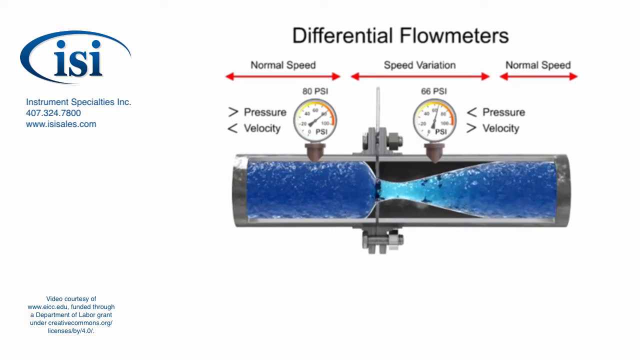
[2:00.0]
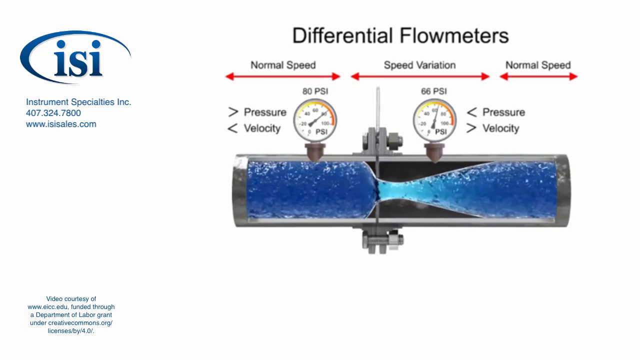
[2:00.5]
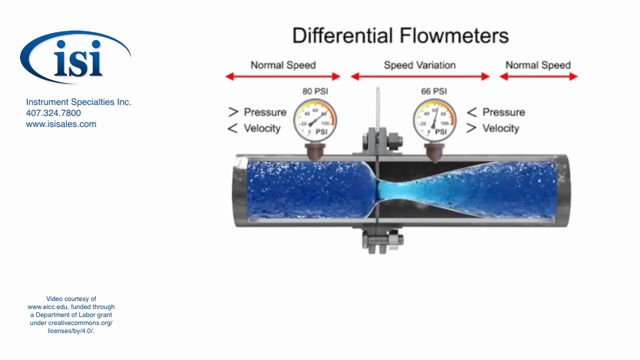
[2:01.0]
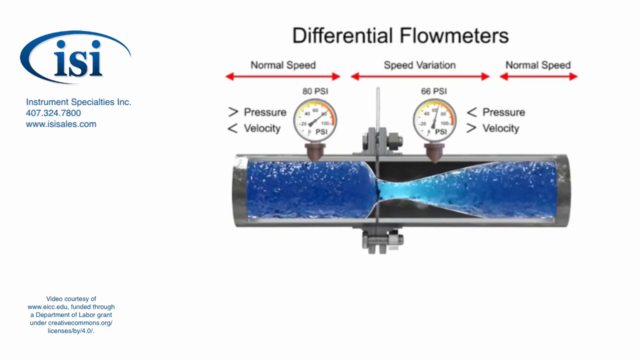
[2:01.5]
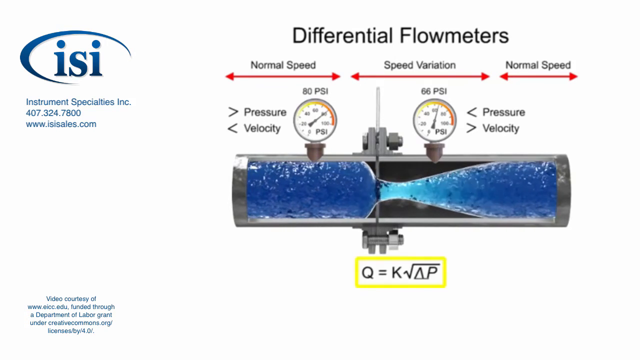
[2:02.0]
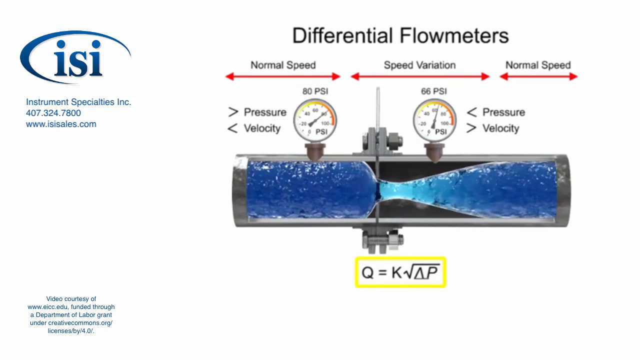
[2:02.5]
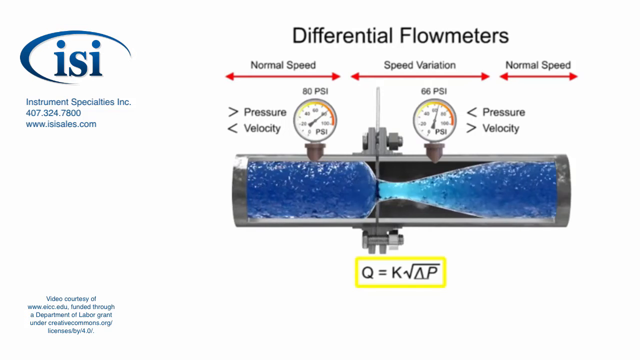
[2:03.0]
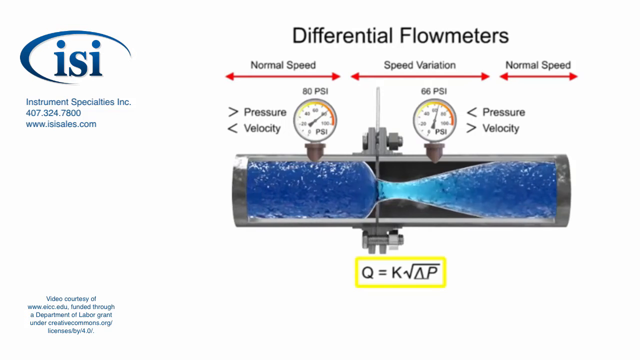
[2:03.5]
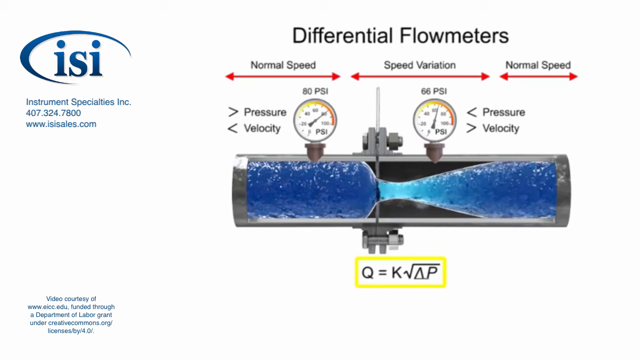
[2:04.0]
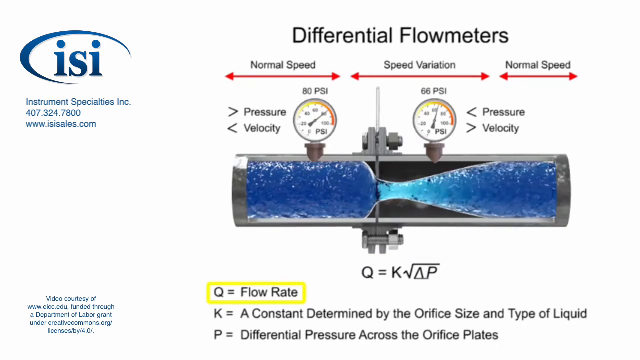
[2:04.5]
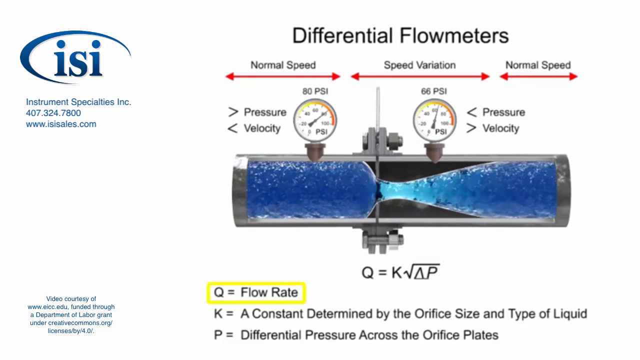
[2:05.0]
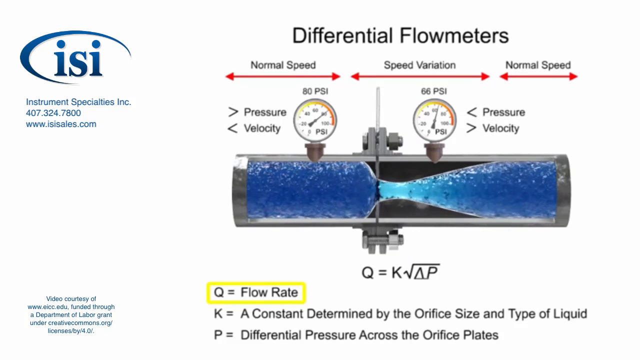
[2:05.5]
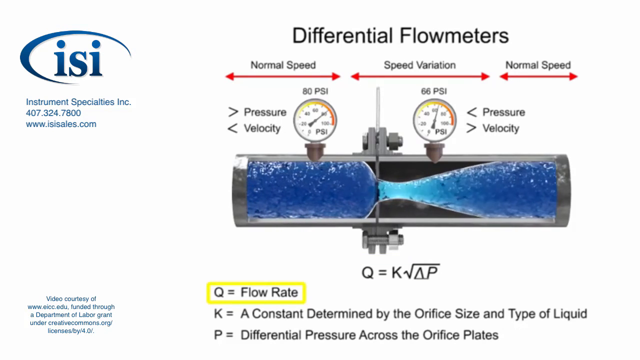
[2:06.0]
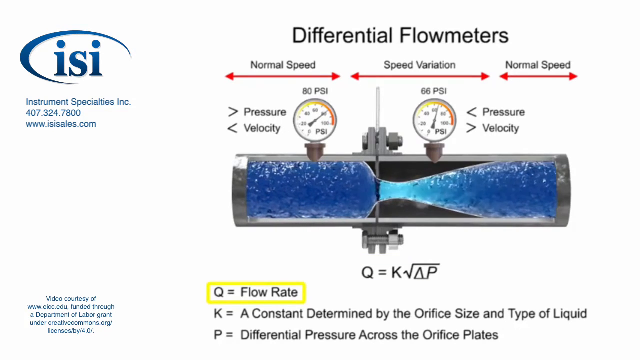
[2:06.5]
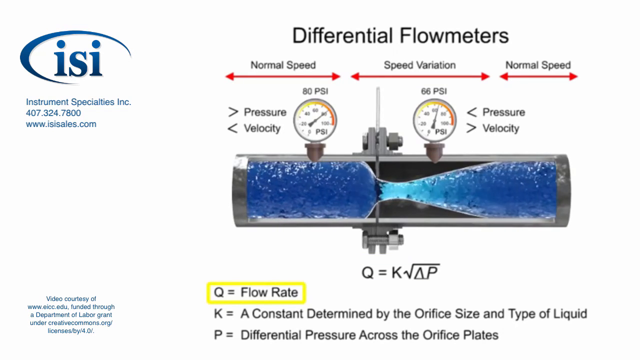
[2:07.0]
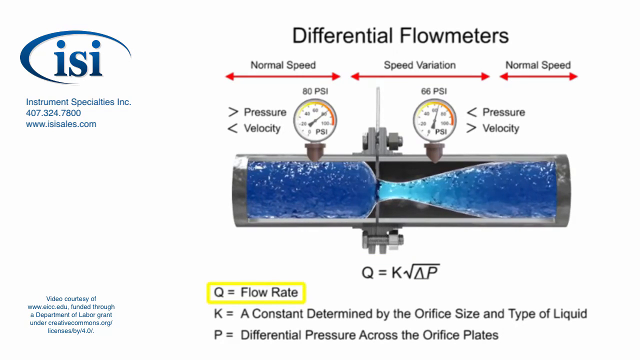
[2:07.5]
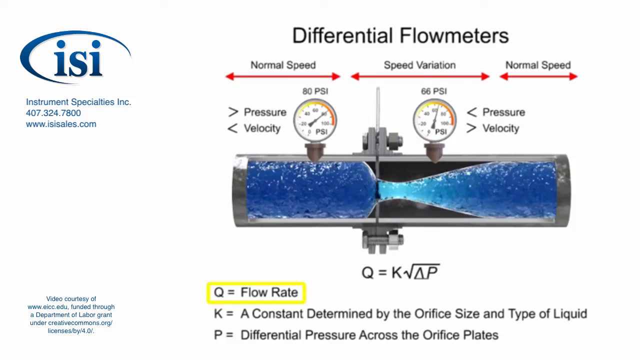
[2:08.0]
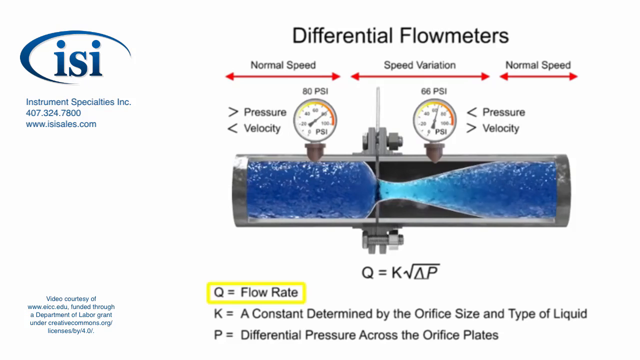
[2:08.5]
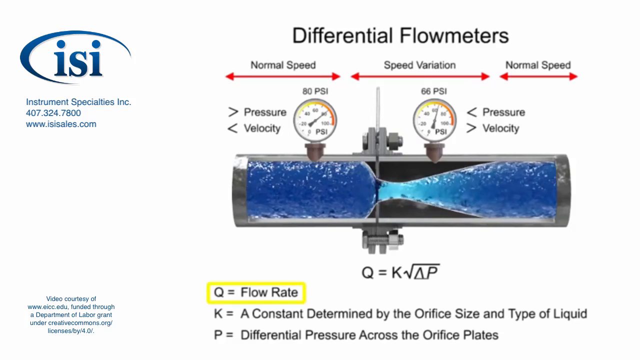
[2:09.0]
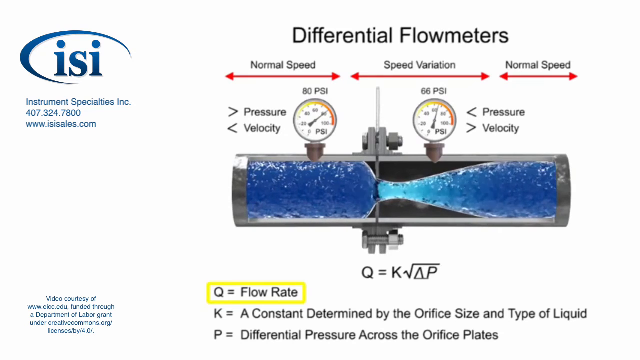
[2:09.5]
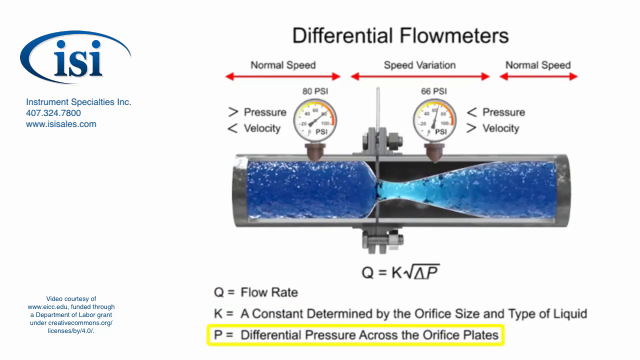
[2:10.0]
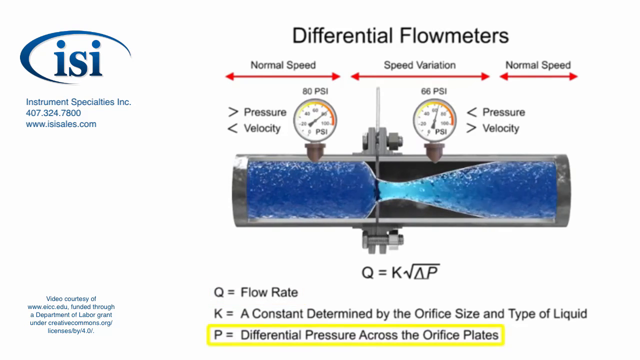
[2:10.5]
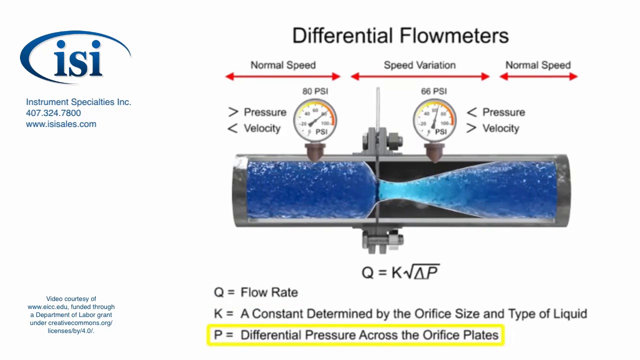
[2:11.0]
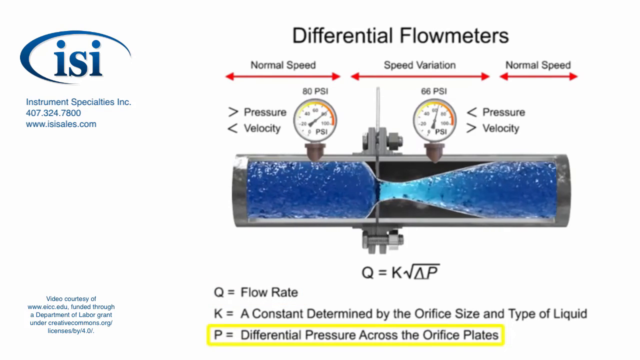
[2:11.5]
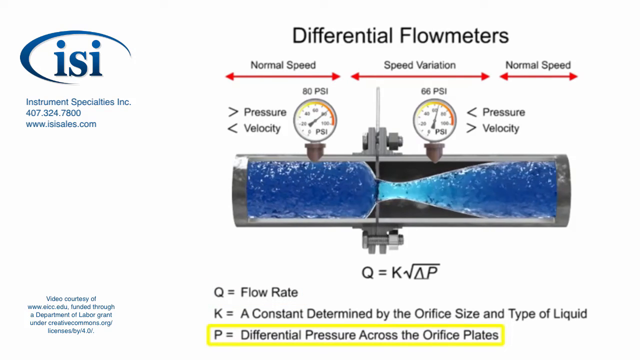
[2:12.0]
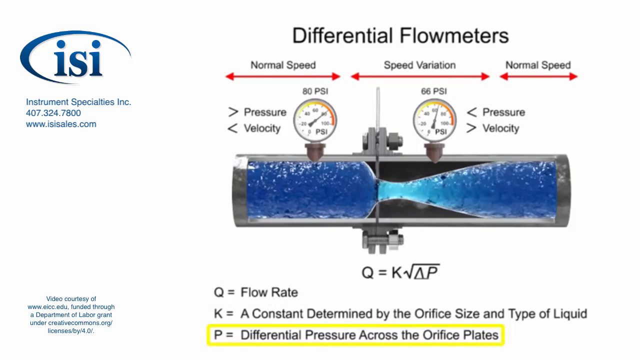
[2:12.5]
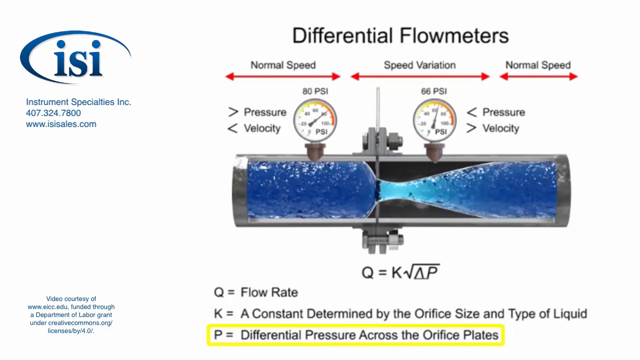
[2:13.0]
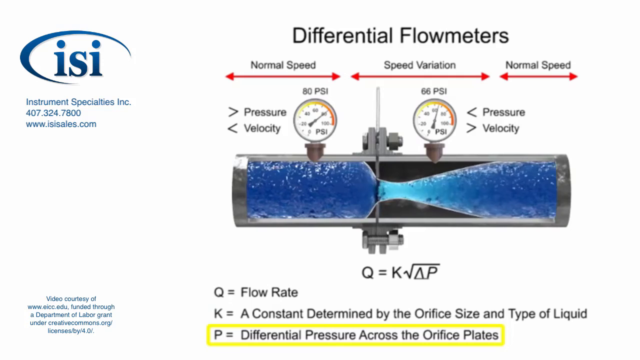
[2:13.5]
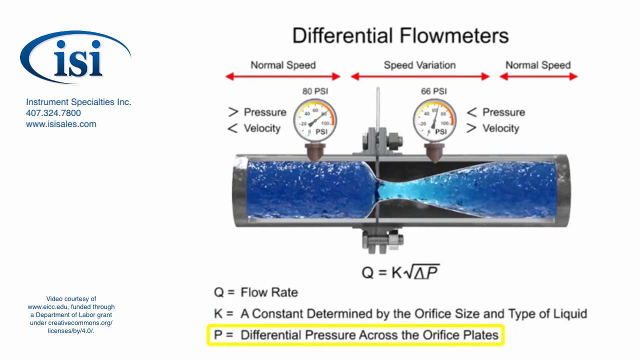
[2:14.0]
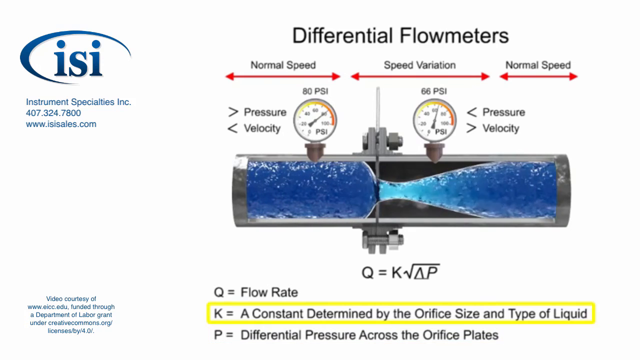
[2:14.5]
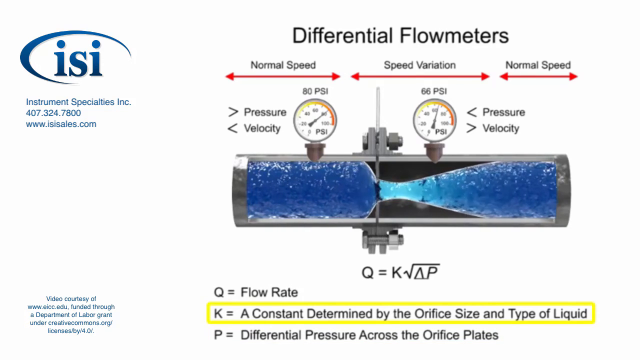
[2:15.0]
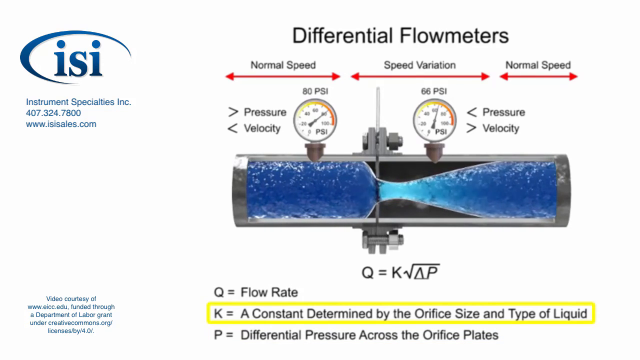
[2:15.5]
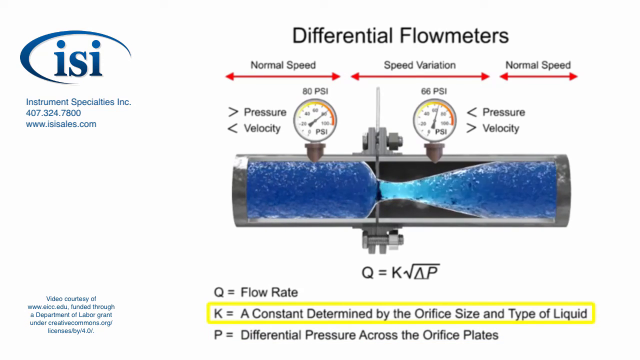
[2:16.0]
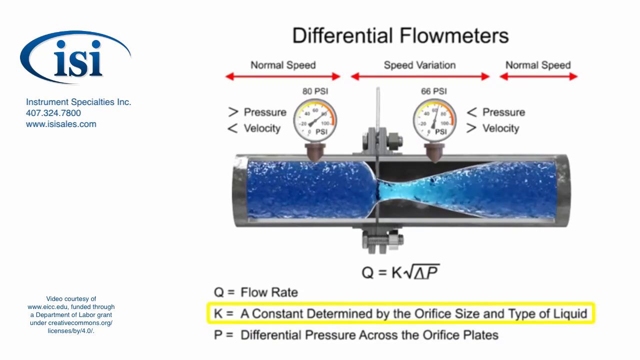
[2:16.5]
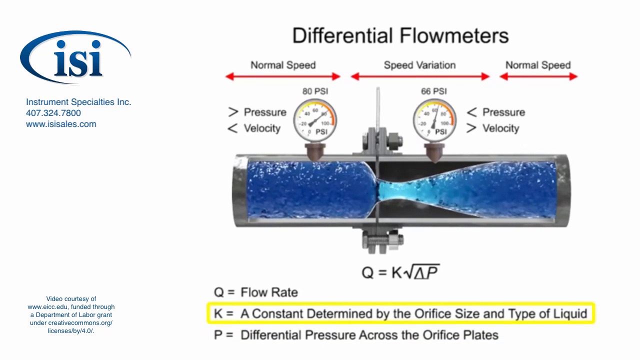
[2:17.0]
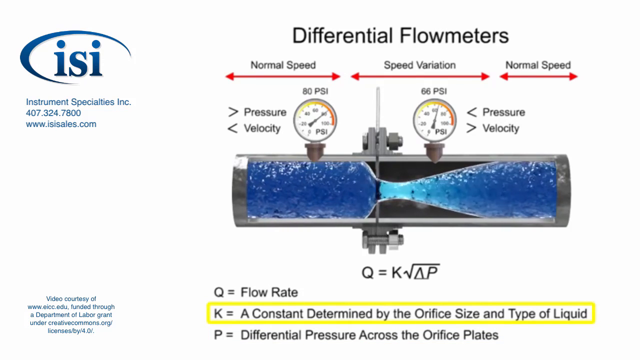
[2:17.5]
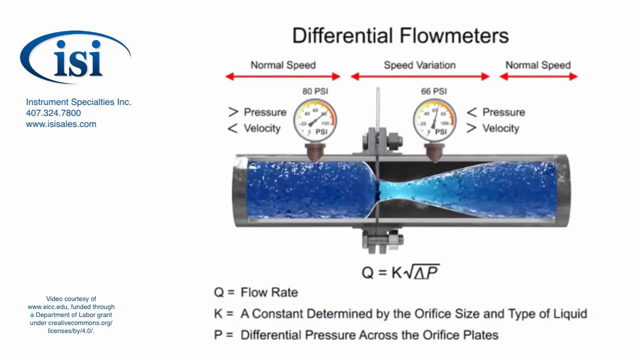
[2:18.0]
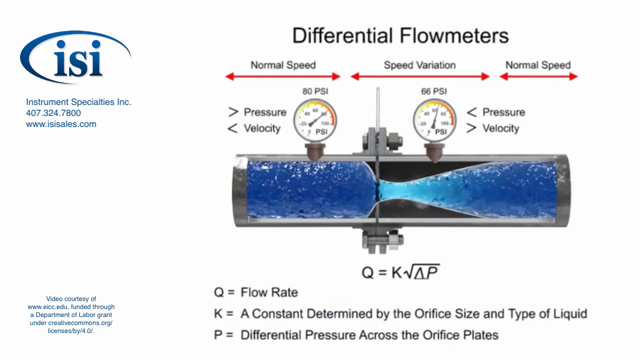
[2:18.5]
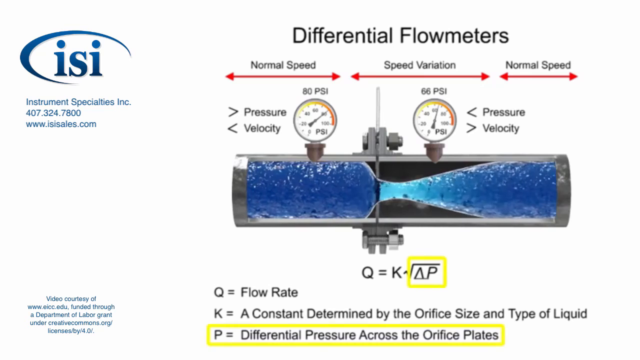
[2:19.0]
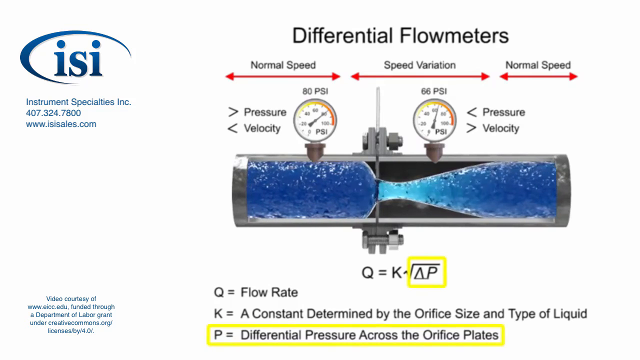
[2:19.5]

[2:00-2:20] An animation shows the pipe with water flowing through it. On the left side of the pipe the water is dark blue. In the middle, where something goes vertically through the pipe, the water flow narrows and the water turns light blue, then turns back to dark blue as it reaches the other side of the pipe. There are two gauges on the pipe: above the left one it says "80 PSI" and above the right one "66 PSI". An equation appears below the pipe, surrounded by a yellow rectangle: Q equals K times the square root of AP. Below that it says Q equals flow rate, surrounded by a yellow rectangle. It also says K equals a constant determined by the orifice size and type of liquid, and P equals differential pressure across the orifice plate. Each of these letters and items is surrounded by a yellow rectangle in turn: the yellow rectangle disappears from the first one, appears on the bottom one, then disappears from the bottom one and appears on the middle one.